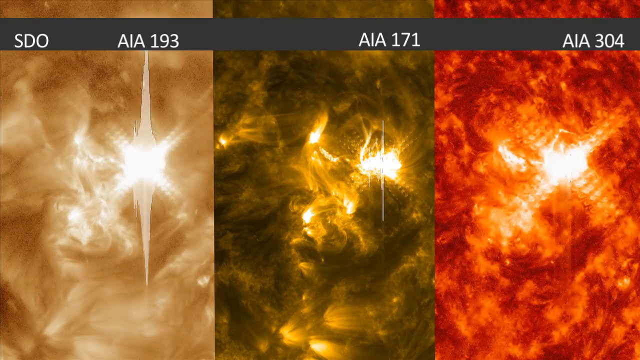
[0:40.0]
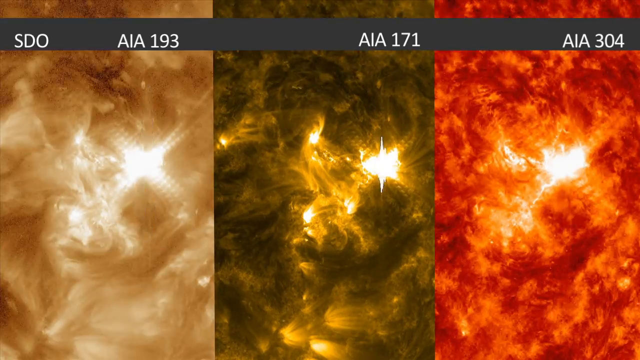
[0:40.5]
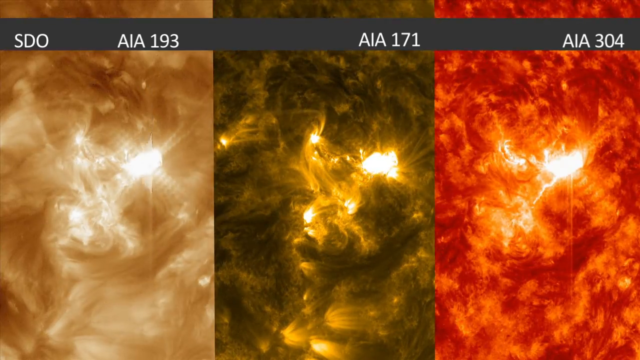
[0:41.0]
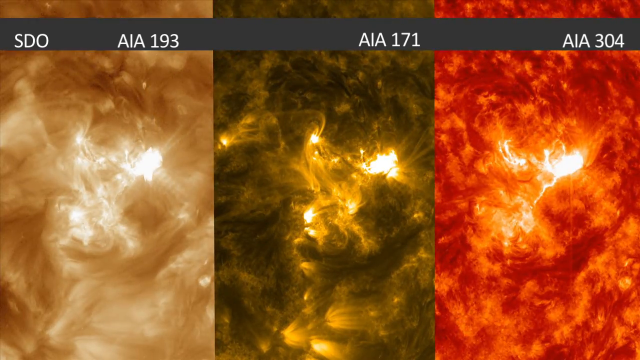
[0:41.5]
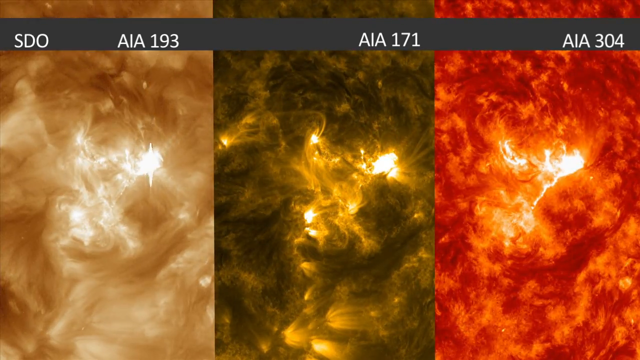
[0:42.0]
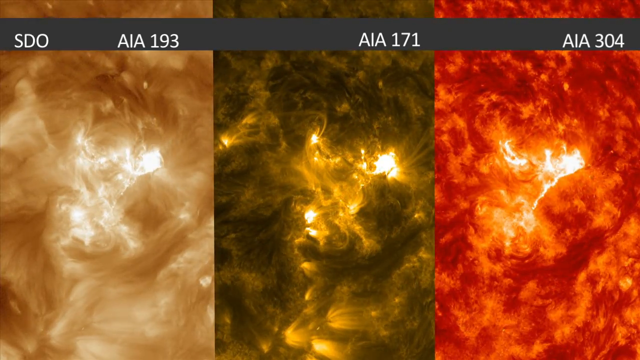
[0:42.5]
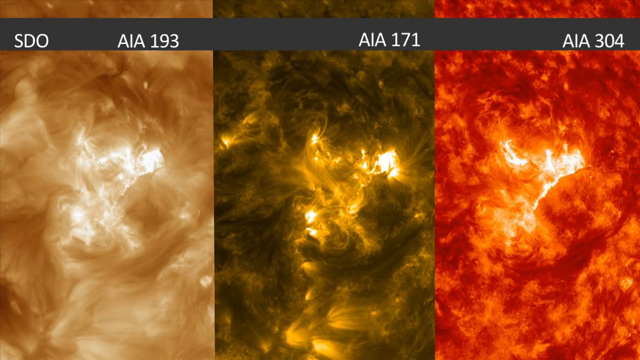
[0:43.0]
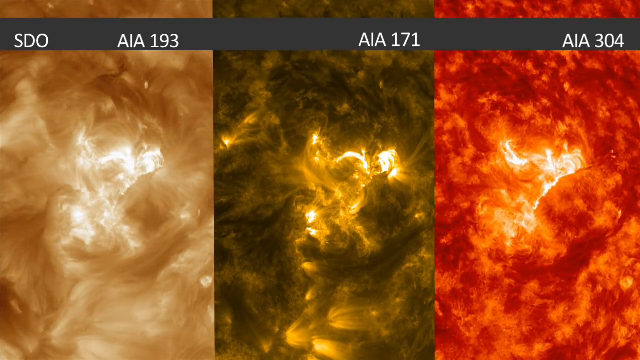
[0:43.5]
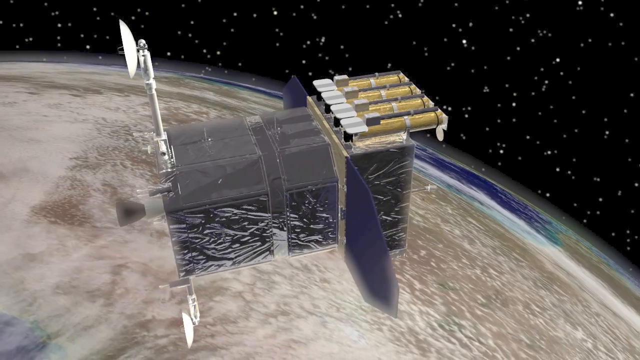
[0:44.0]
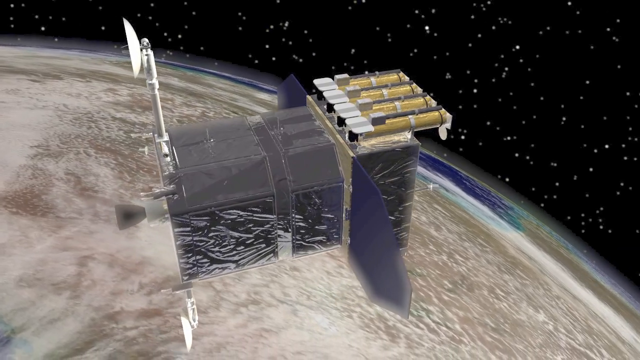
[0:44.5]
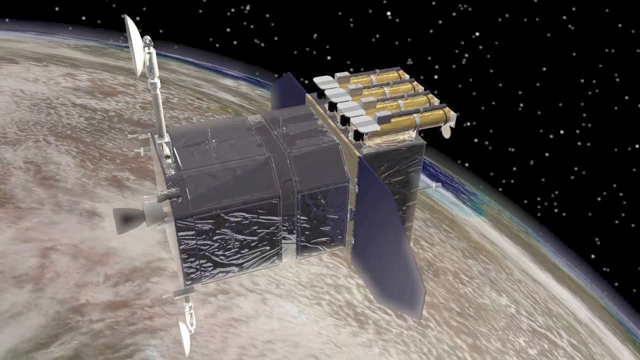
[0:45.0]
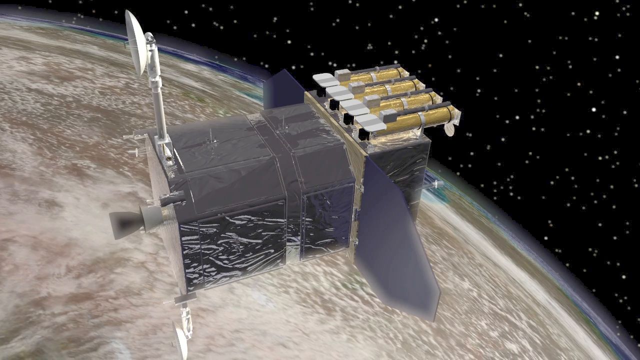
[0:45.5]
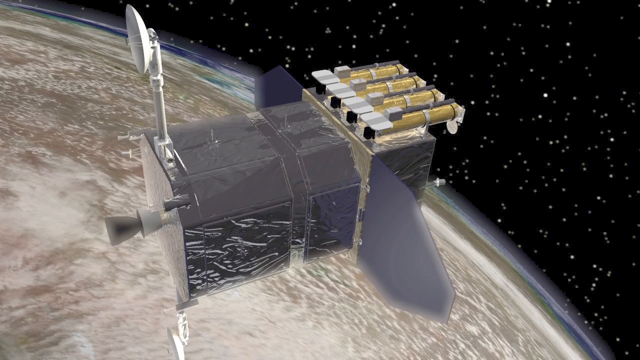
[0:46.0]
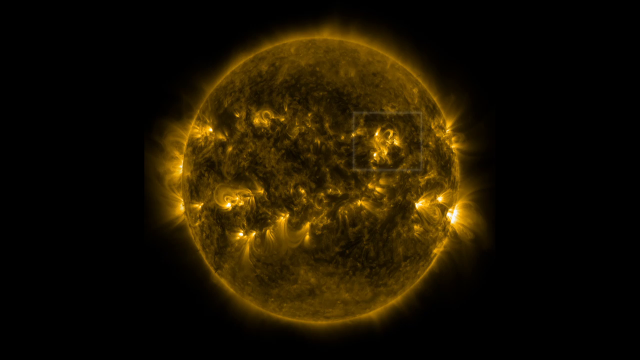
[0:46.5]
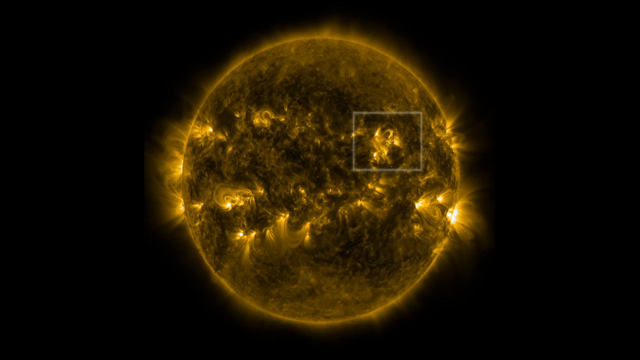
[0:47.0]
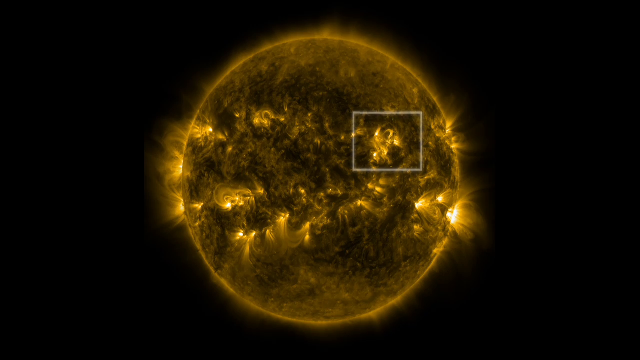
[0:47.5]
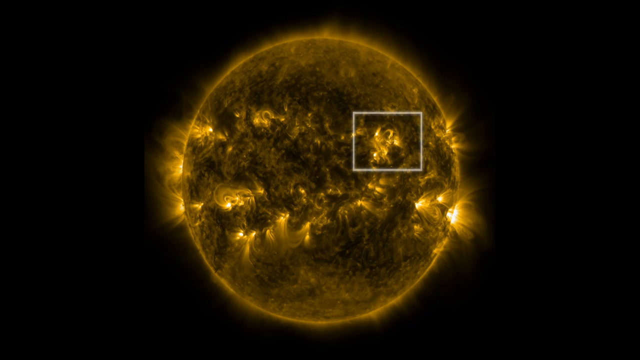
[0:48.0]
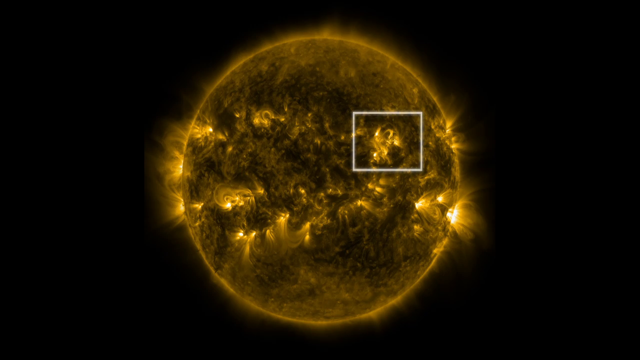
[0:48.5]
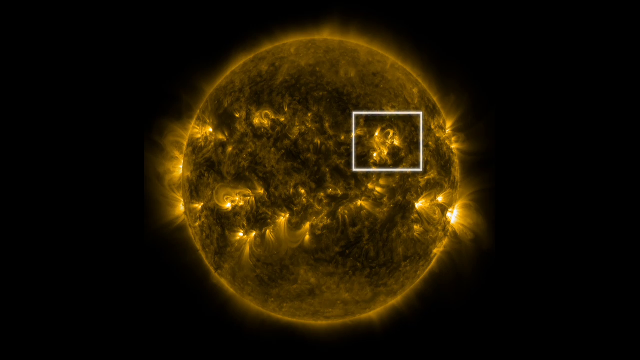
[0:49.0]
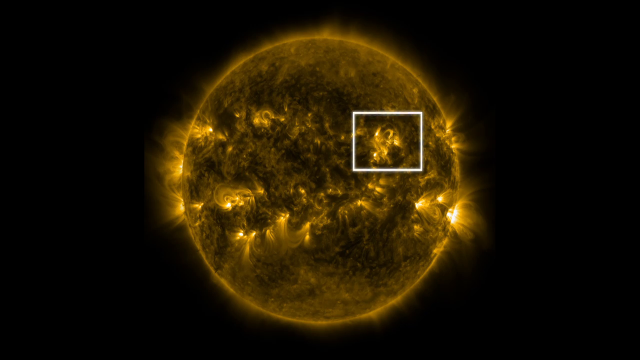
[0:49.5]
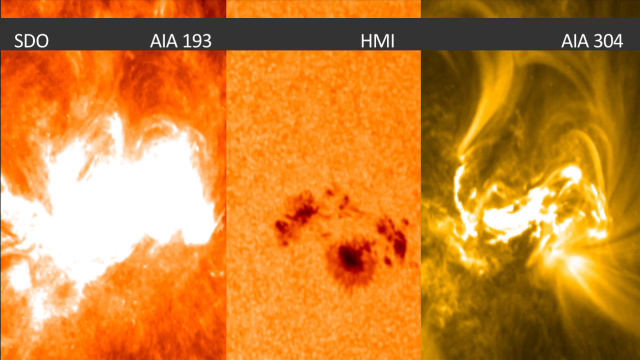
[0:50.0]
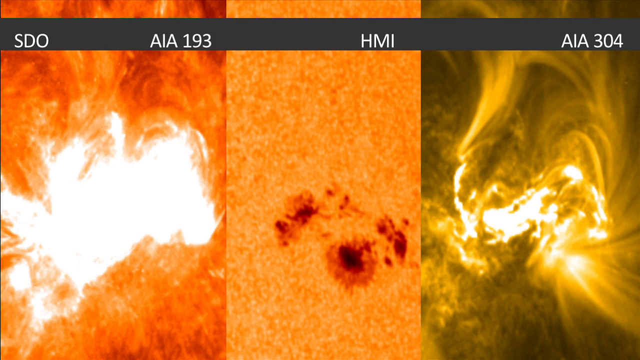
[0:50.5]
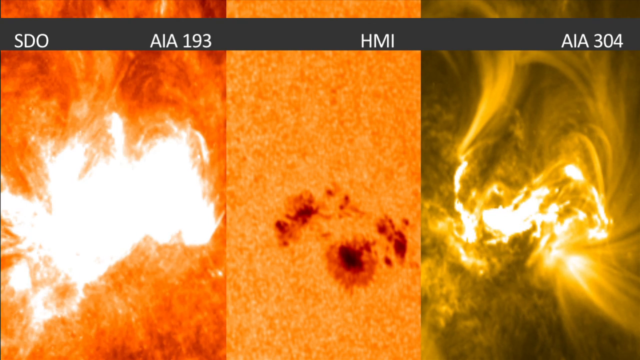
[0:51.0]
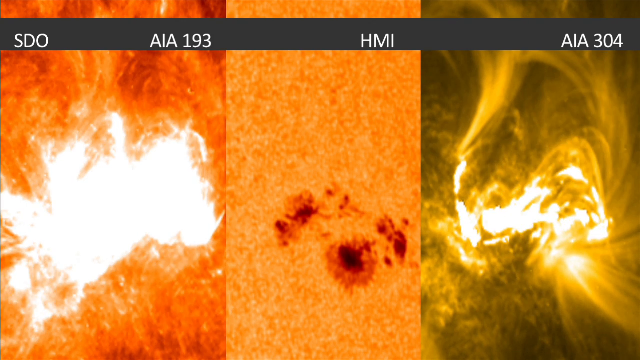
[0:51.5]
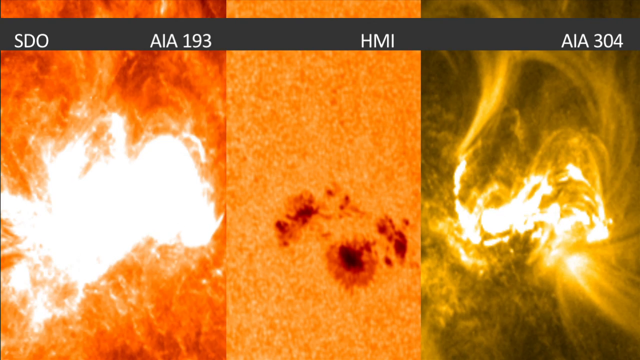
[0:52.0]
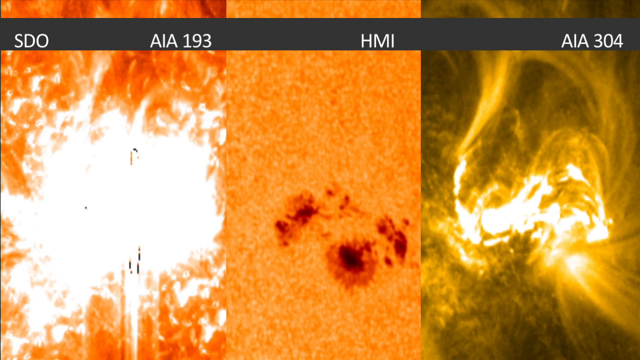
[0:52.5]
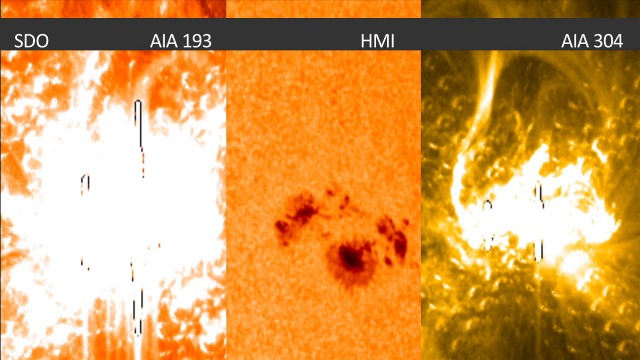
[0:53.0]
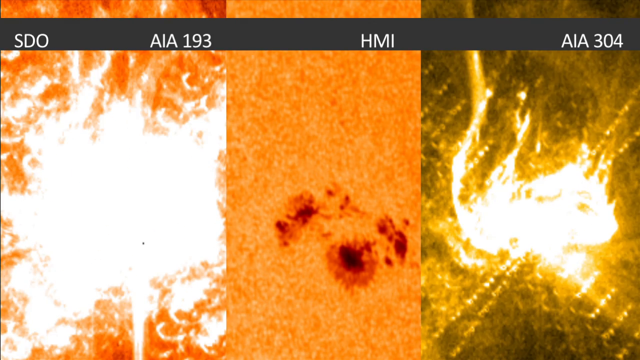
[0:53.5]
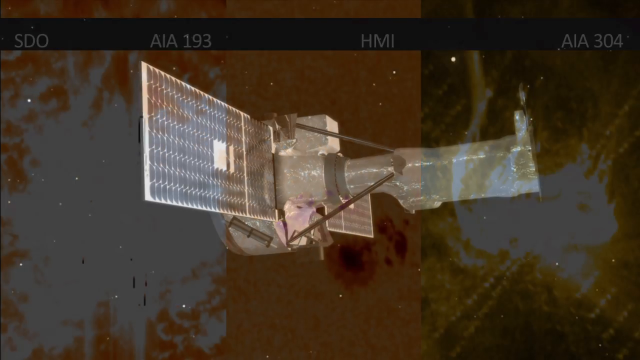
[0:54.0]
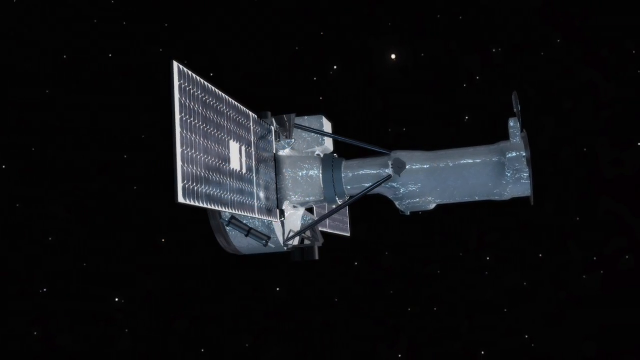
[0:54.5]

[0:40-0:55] Three solar flares are lined up: one is tan with some white patches, the next is greenish-yellow with some white patches and some yellowish areas, and the third is bright orange with some darker orange areas and white solar flares that flare up. All three are shown at once, with a gray strip at the top containing white text. A computer-generated image of a satellite follows; the satellite hovers over what may be a planet or maybe the Sun. The satellite is grayish, and the space behind it is black with white speckles that probably represent stars. Next, a shot of the Sun shows a white square on it that might be pointing out a solar flare; the Sun looks yellowish, kind of greenish-yellow, a kind of sickly color, against a completely black background with no stars. Then another shot of three solar flares appears: one is bright orange with a large white flare in the middle, one is pale orange and does not move much, and the third is greenish-yellow with a white patch in the middle that flares up. Another digital shot of a satellite follows.